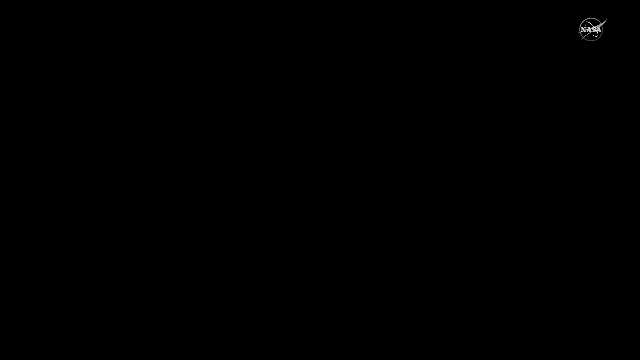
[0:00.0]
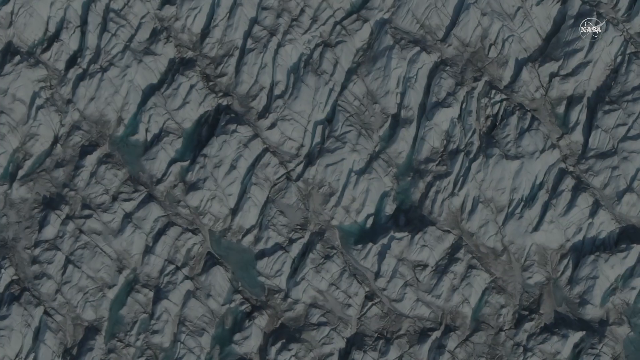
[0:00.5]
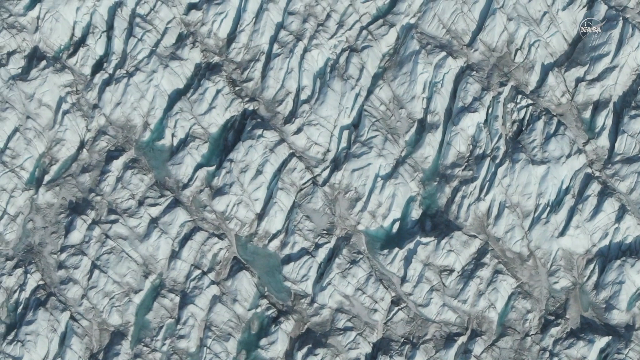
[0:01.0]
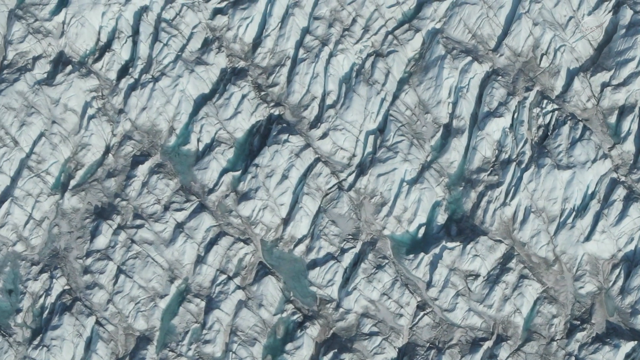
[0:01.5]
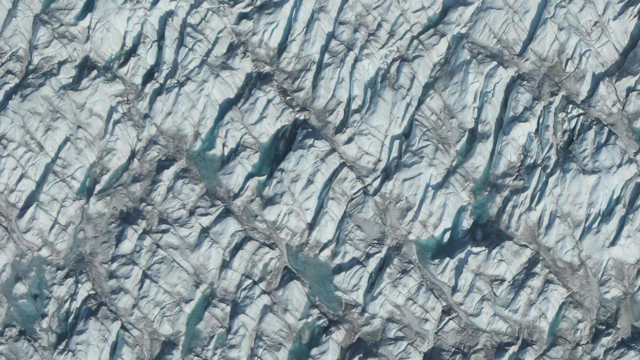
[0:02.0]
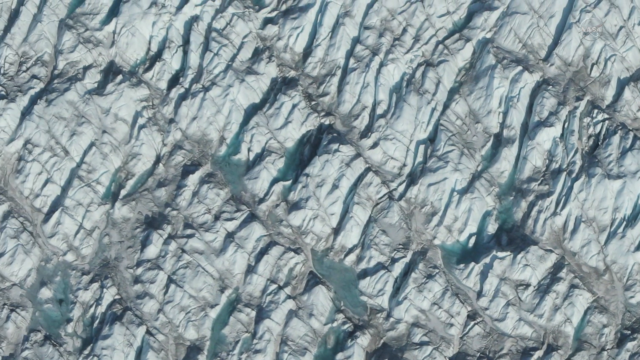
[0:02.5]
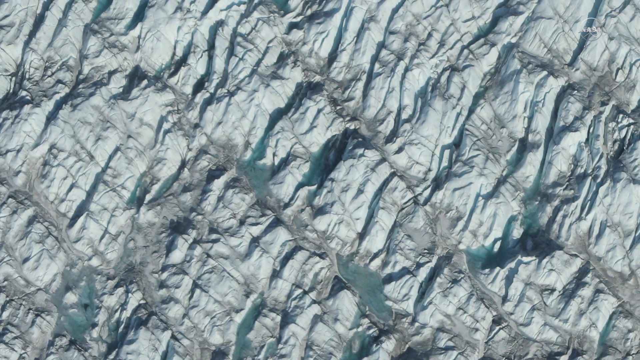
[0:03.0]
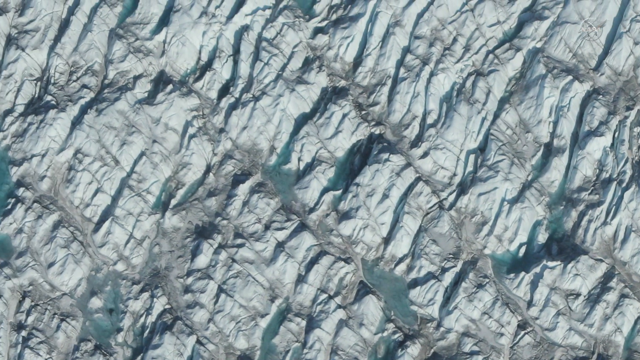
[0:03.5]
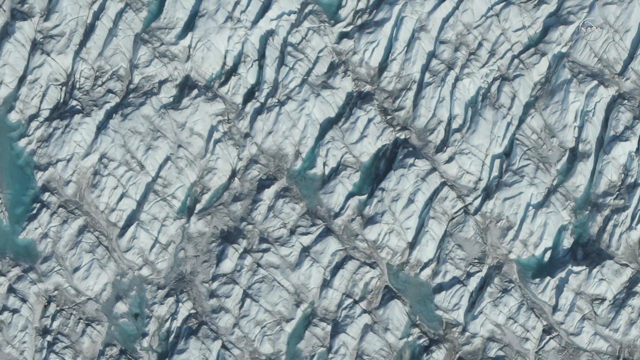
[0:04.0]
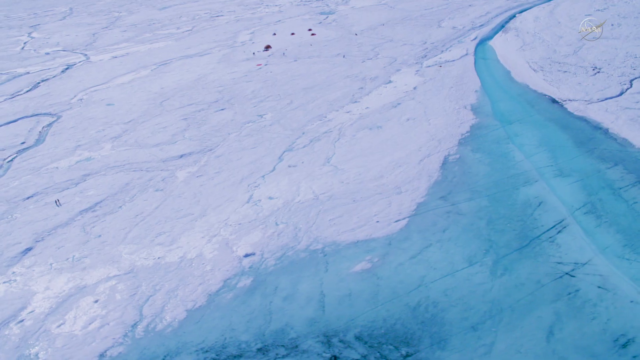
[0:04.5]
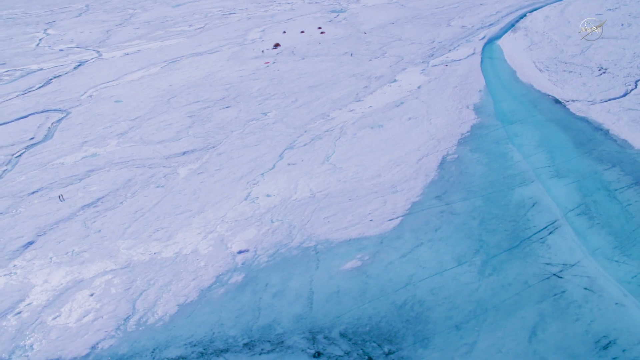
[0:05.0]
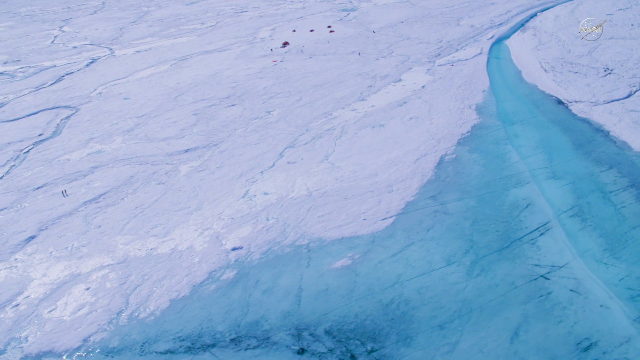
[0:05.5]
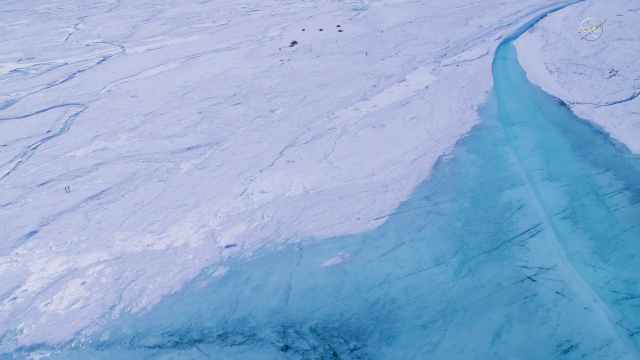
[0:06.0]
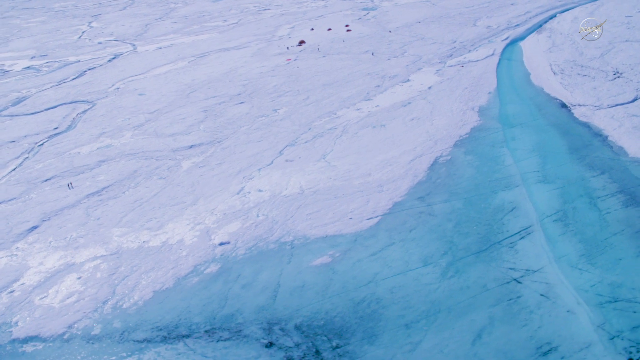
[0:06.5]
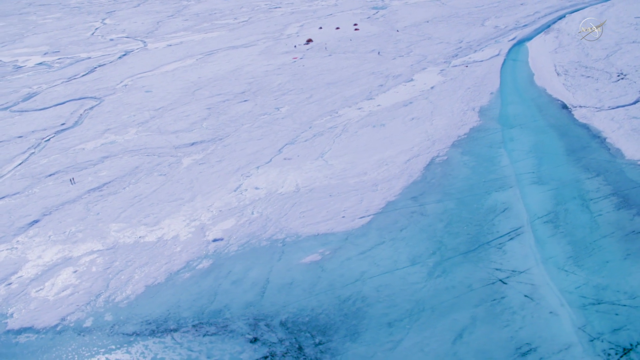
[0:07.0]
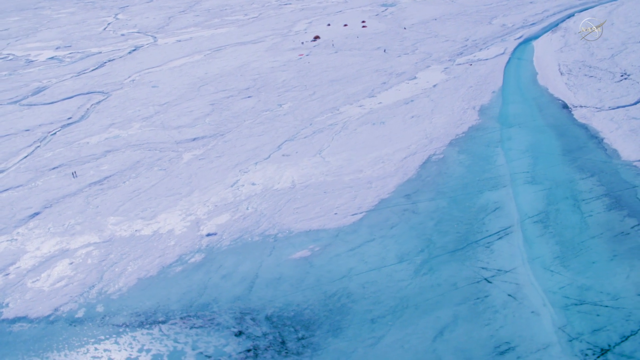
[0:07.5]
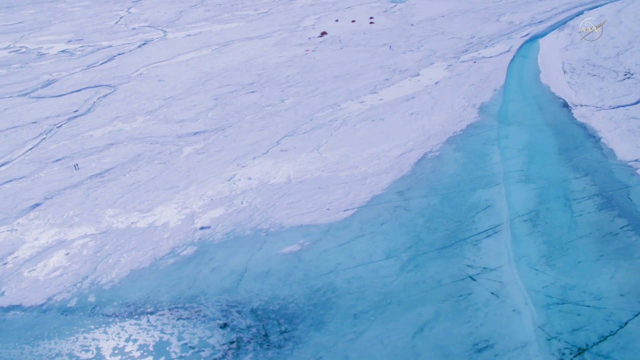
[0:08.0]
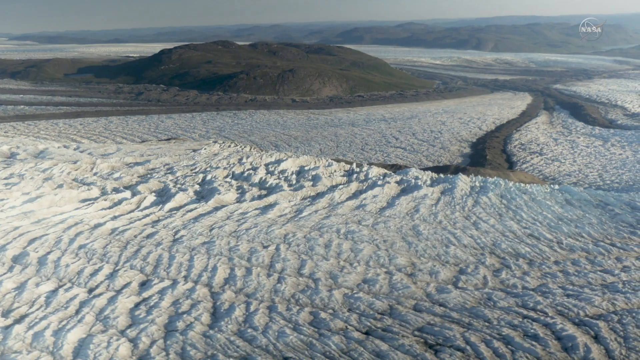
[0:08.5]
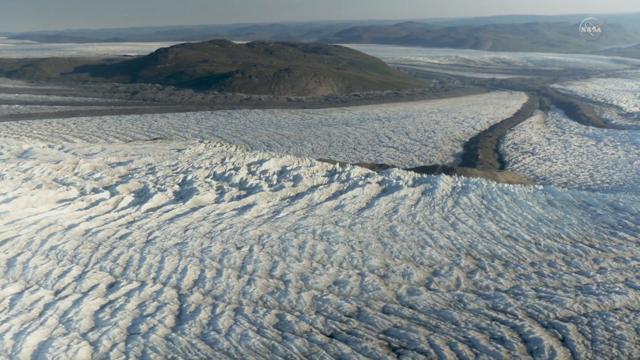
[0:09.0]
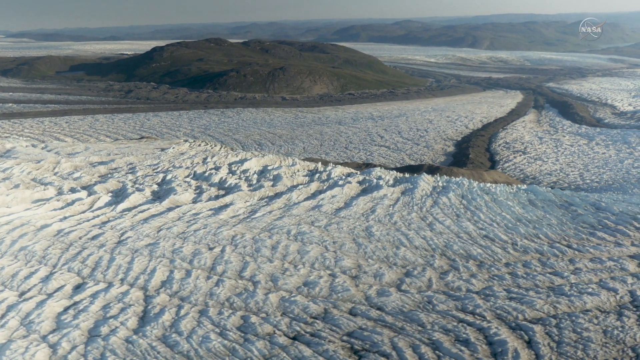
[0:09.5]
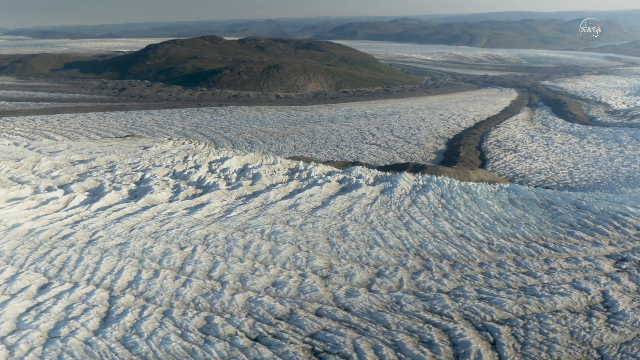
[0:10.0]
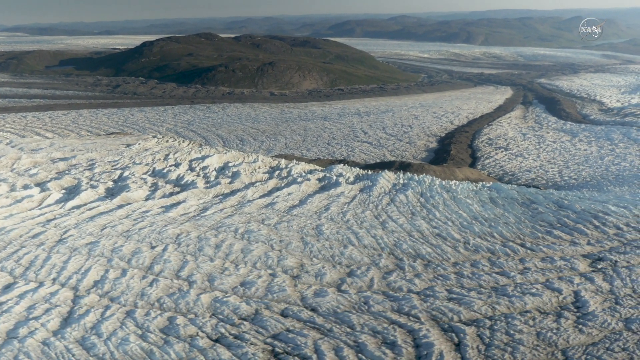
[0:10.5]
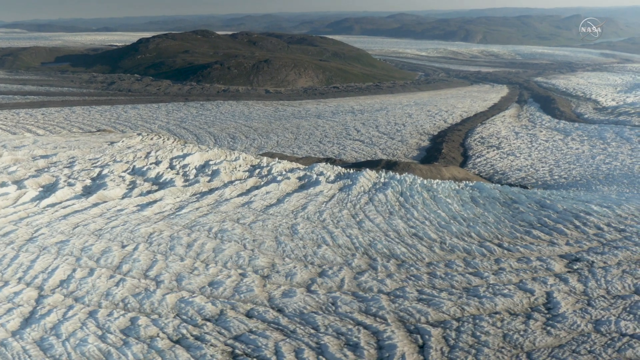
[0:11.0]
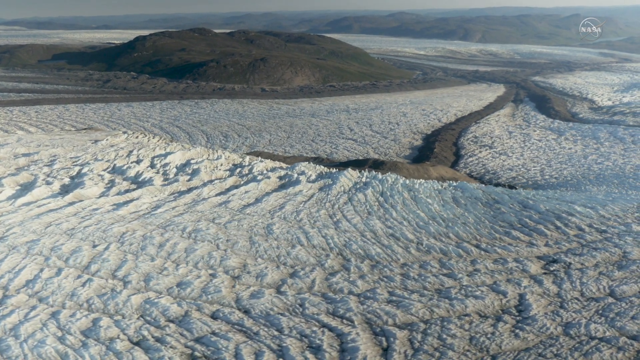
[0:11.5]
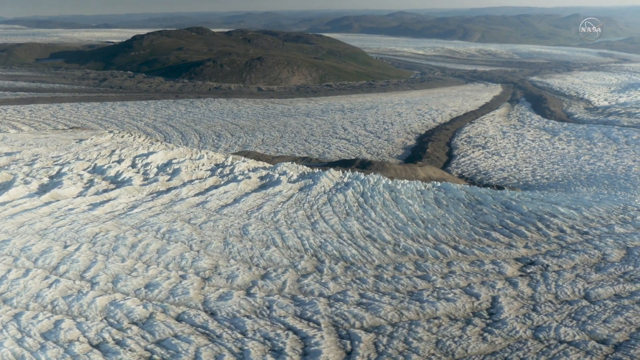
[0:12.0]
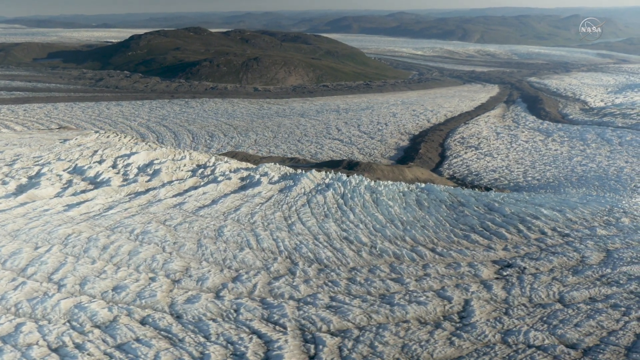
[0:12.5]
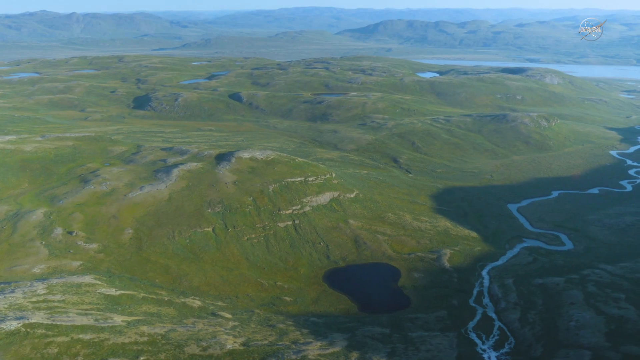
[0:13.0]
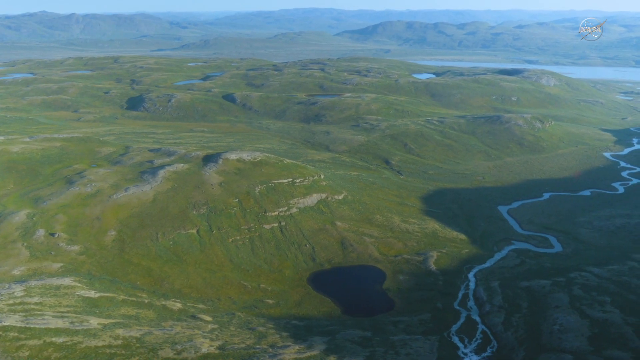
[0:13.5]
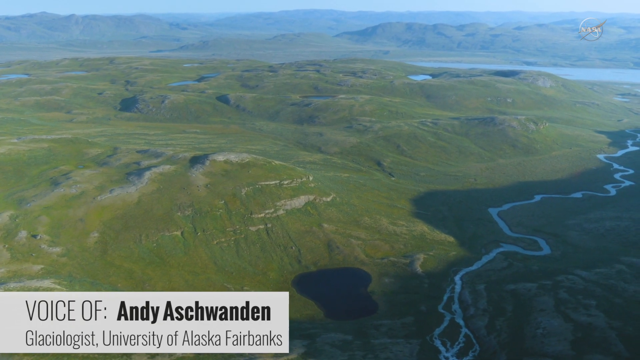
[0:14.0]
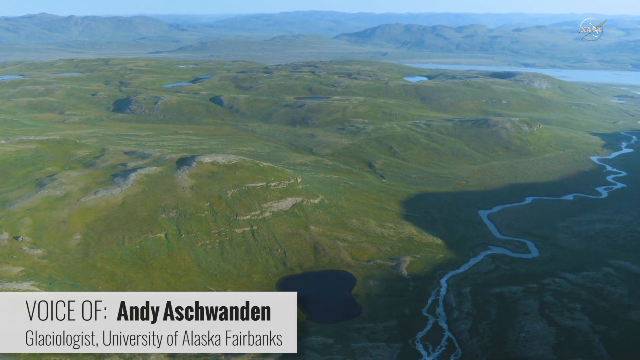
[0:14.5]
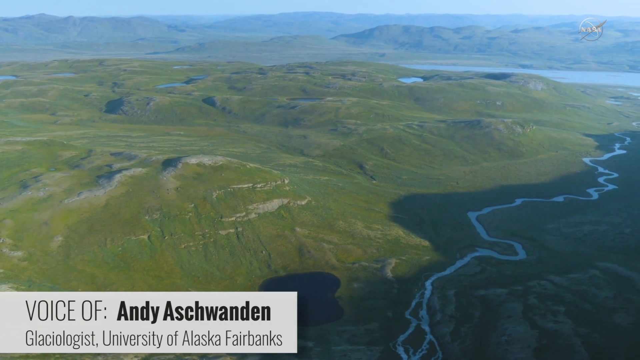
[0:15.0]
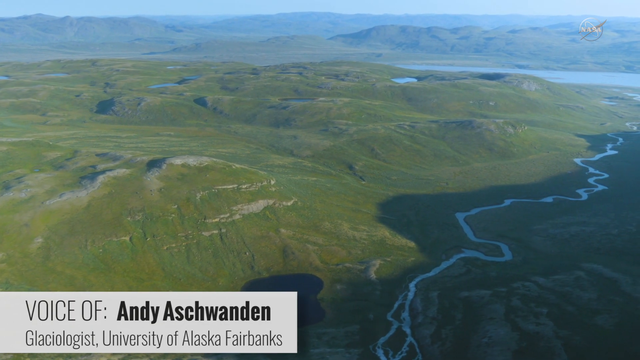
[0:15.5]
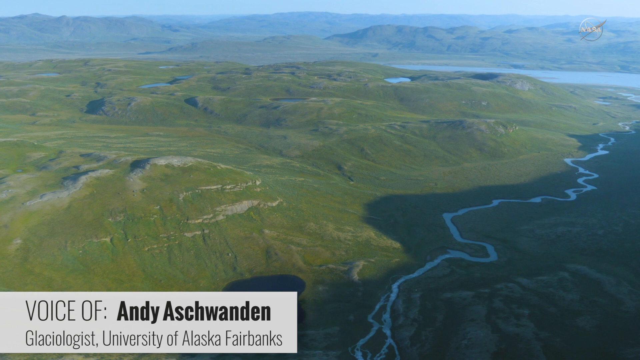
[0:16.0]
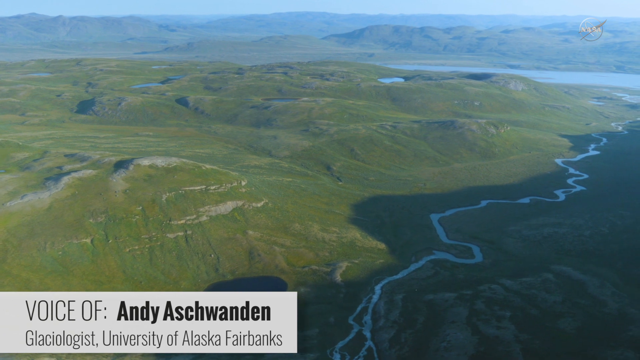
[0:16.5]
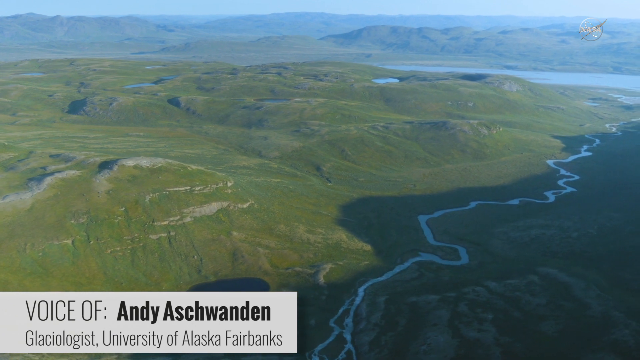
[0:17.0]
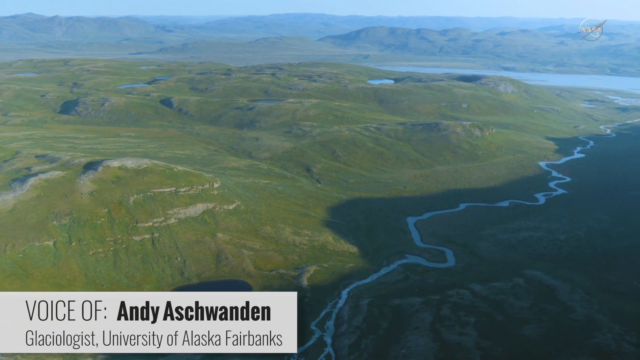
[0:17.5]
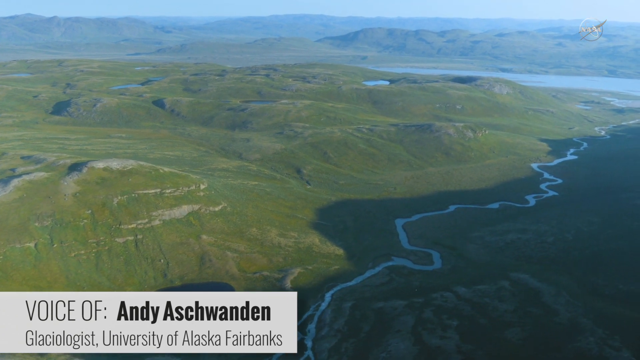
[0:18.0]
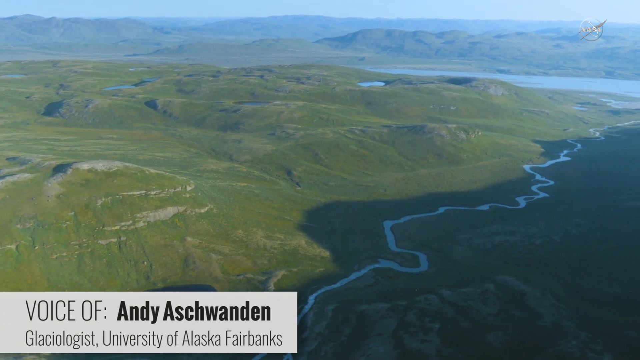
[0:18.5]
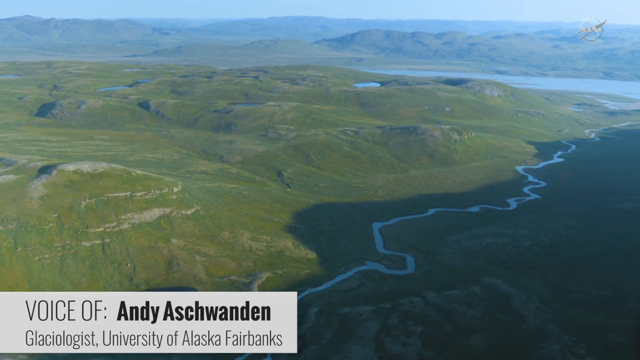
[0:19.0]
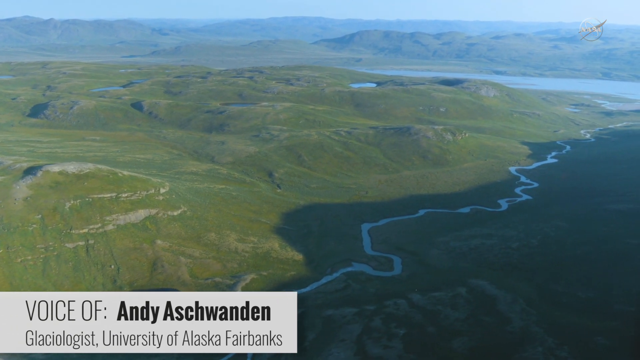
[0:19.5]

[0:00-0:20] An object that looks like ice appears, and then the scene changes to what possibly looks like polar ice. Large sheets of ice are everywhere, and there appear to be volcanic areas in valleys filled with a great deal of ice. The scene switches to green lands, most likely Alaska in the summertime. Large valleys have rivers in them, and grass is growing all over the hills and valleys. In the lower left of the screen, a credit reads "voice of Andy" followed by his last name, and then "glaciologist of Alaska Fairbanks." Large hills and valleys spread across the view, with a river running down through the center that looks like it feeds into a larger river in the distance.